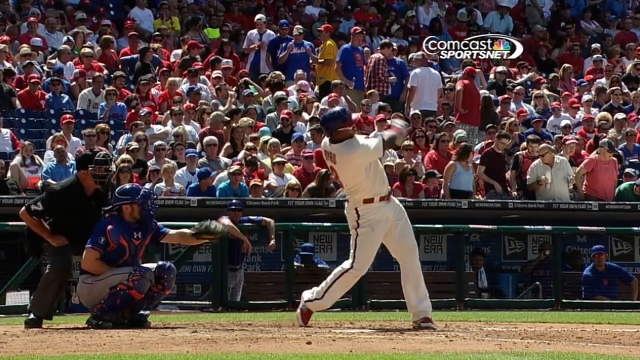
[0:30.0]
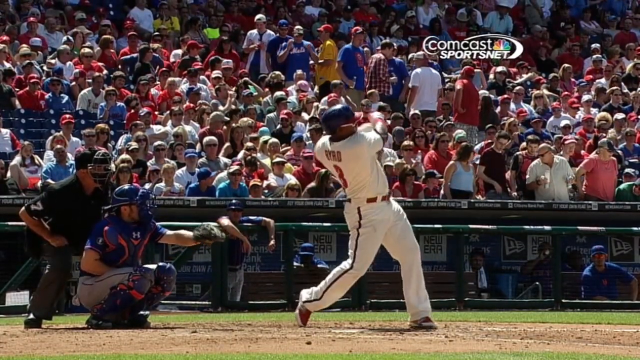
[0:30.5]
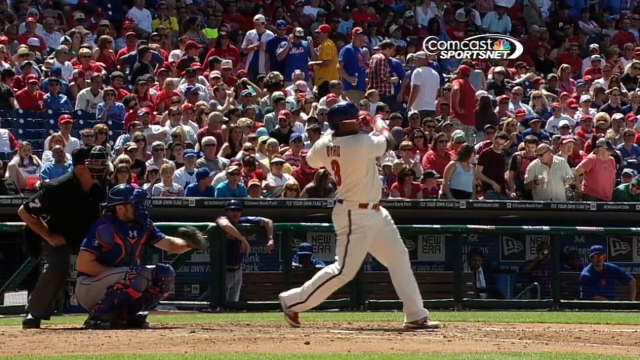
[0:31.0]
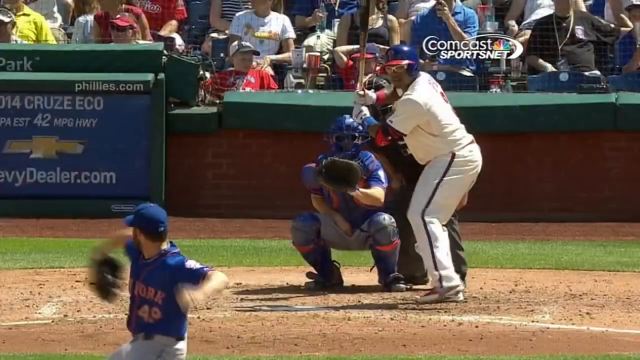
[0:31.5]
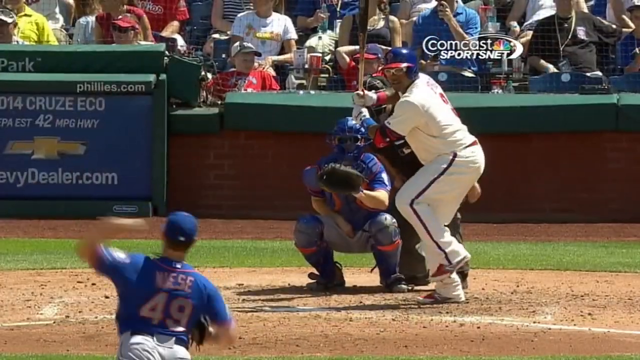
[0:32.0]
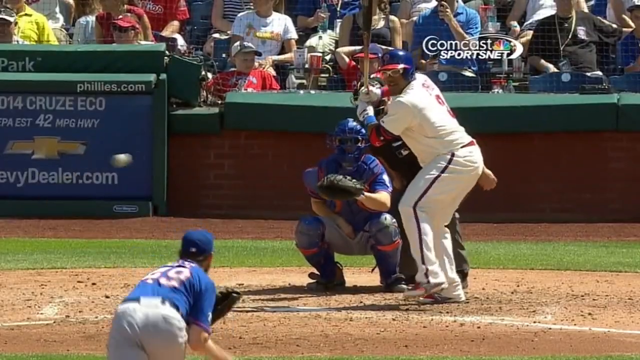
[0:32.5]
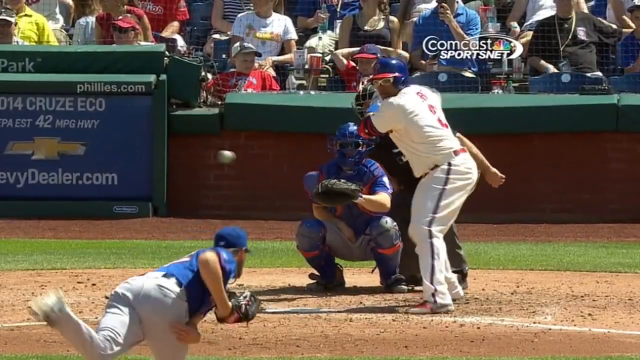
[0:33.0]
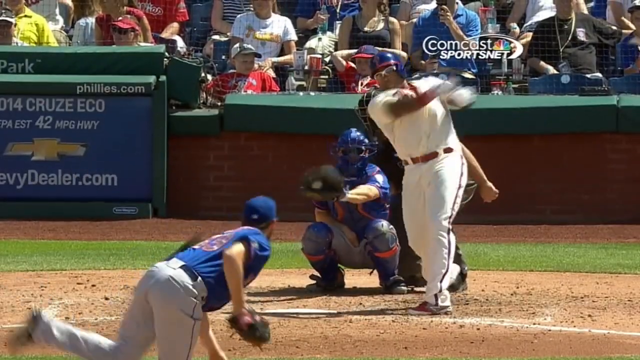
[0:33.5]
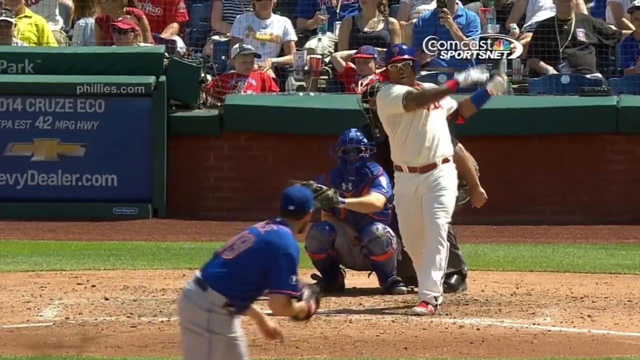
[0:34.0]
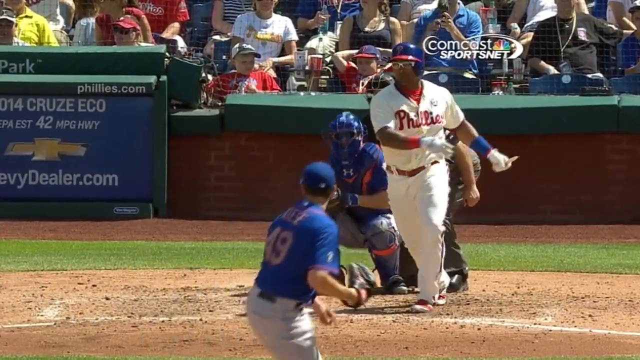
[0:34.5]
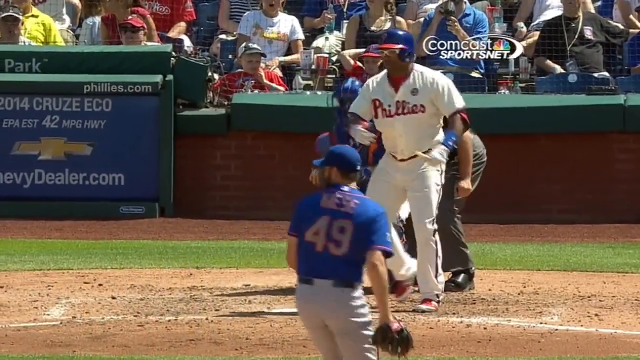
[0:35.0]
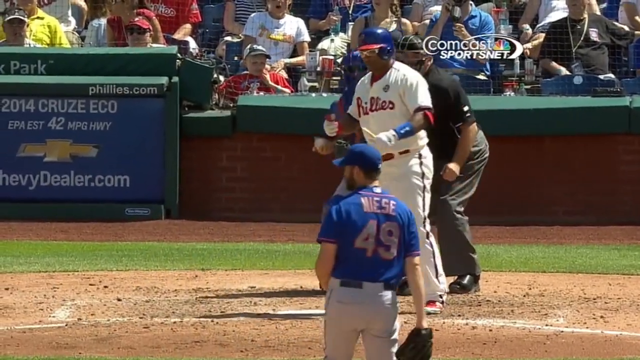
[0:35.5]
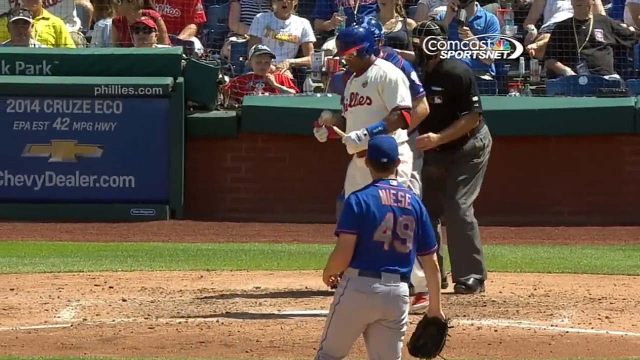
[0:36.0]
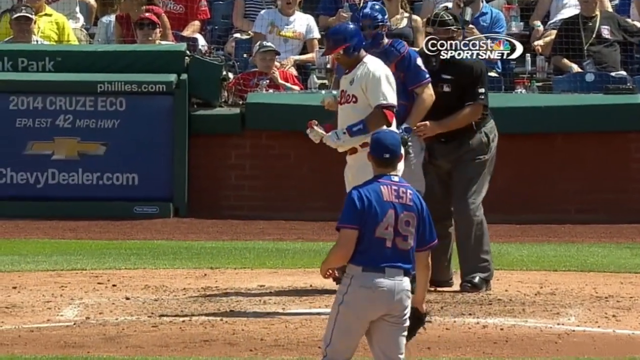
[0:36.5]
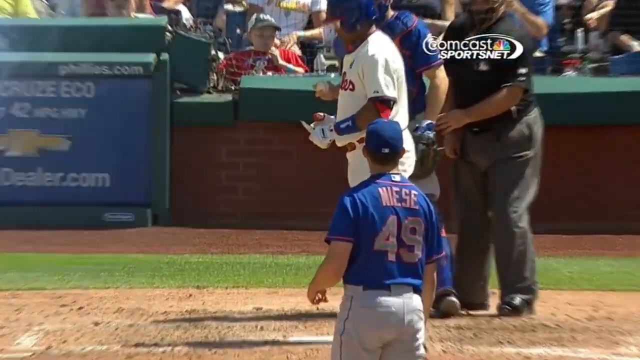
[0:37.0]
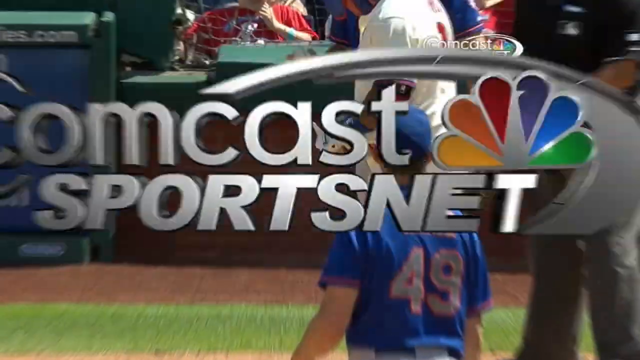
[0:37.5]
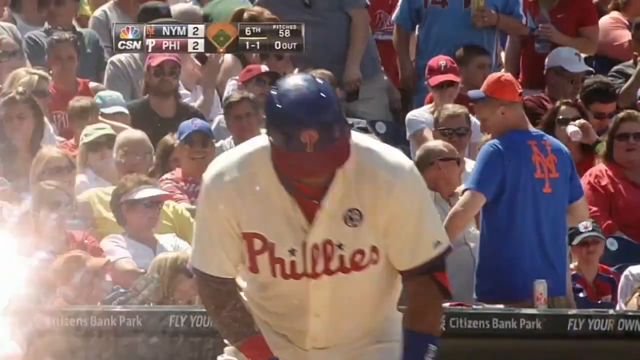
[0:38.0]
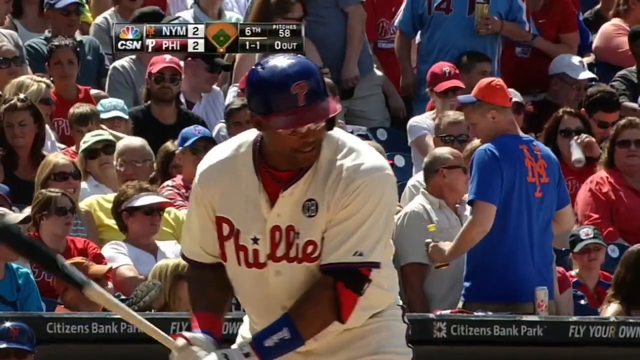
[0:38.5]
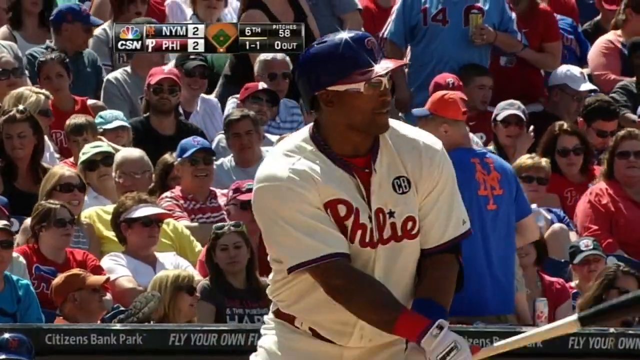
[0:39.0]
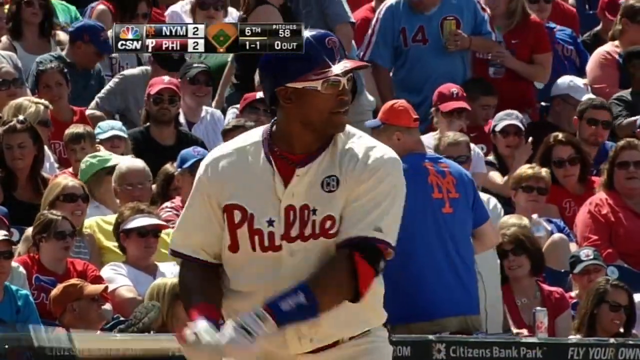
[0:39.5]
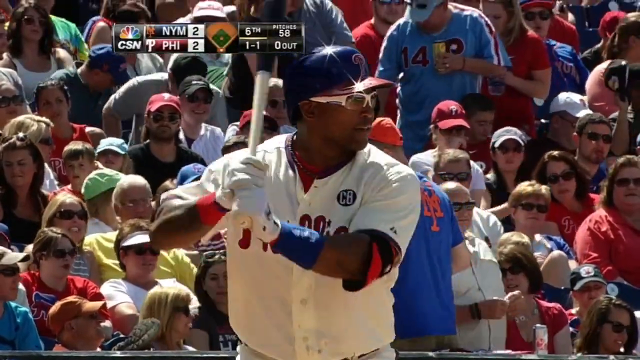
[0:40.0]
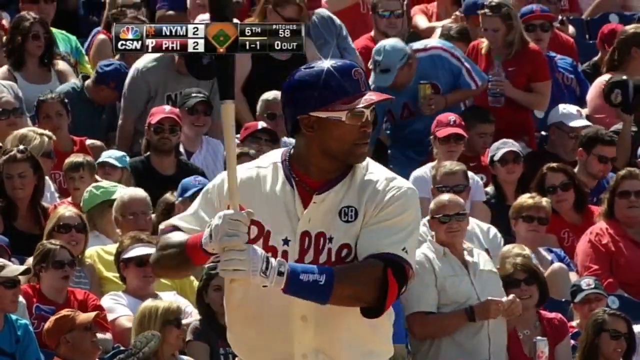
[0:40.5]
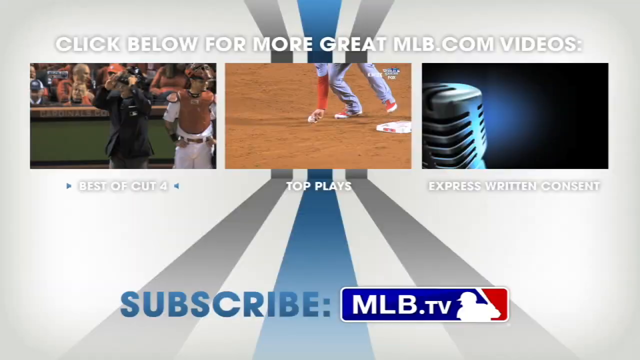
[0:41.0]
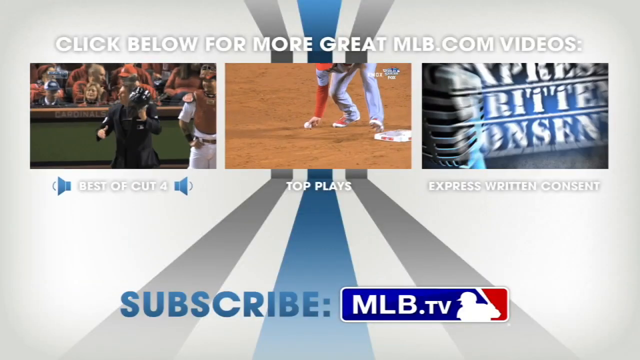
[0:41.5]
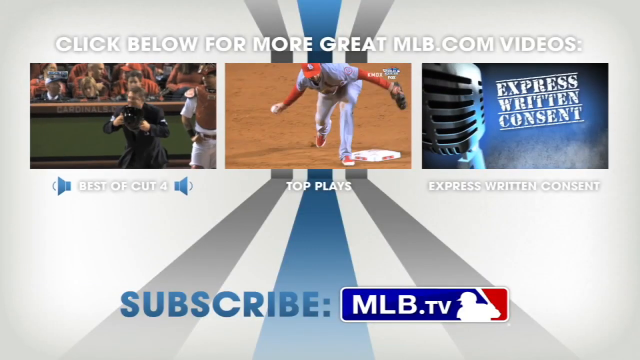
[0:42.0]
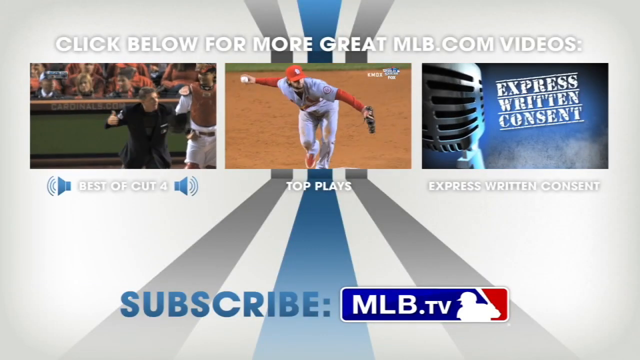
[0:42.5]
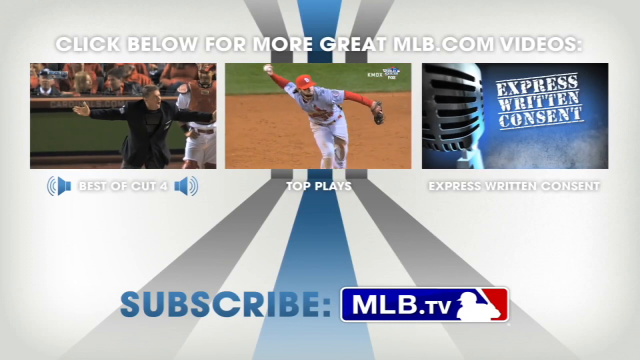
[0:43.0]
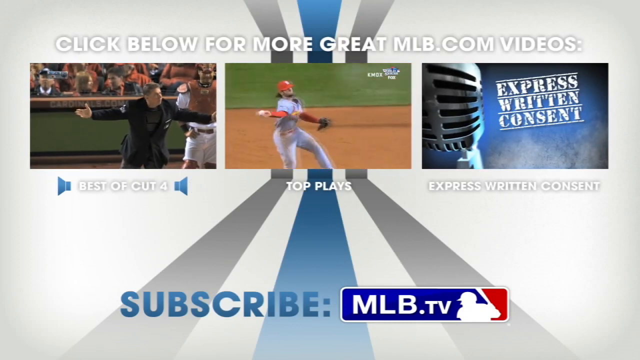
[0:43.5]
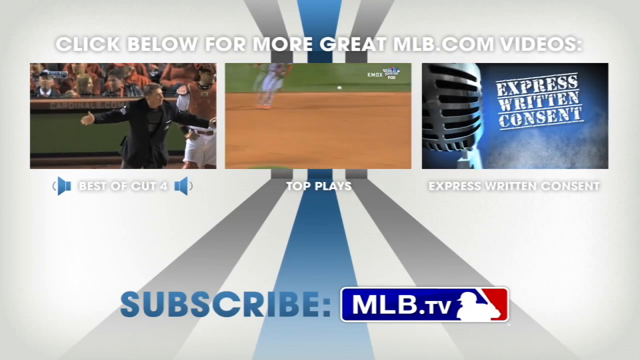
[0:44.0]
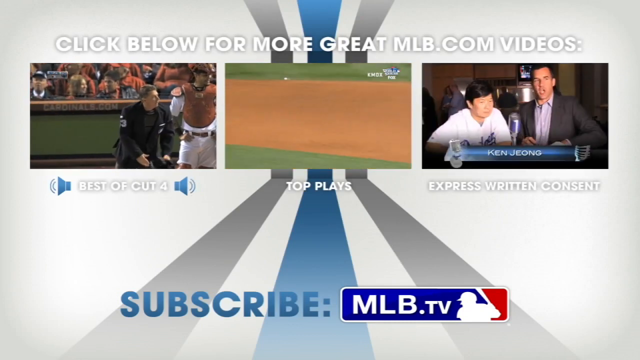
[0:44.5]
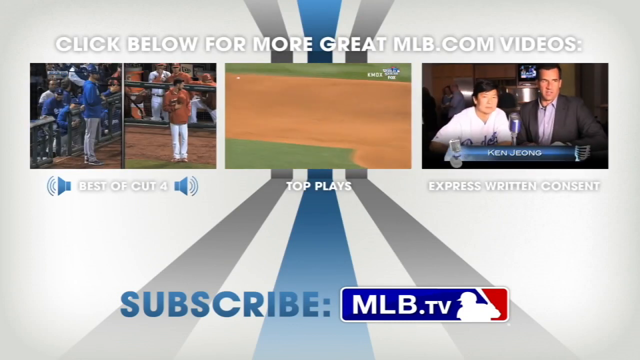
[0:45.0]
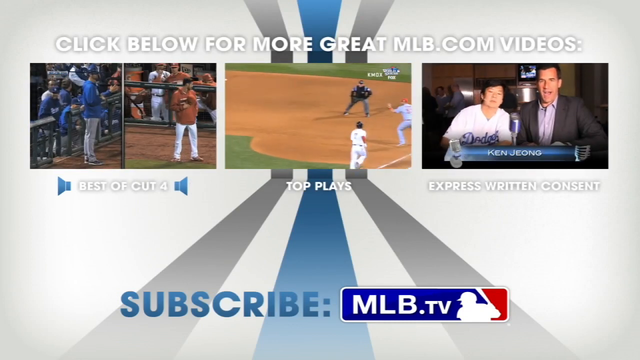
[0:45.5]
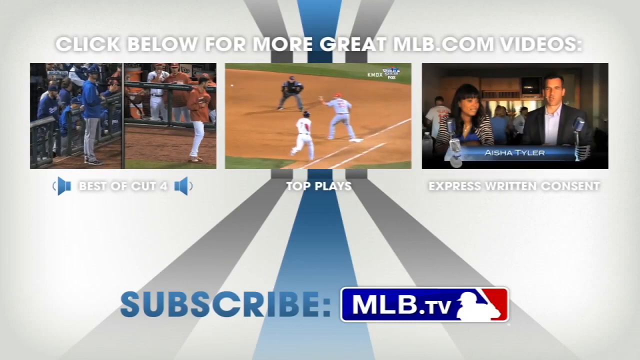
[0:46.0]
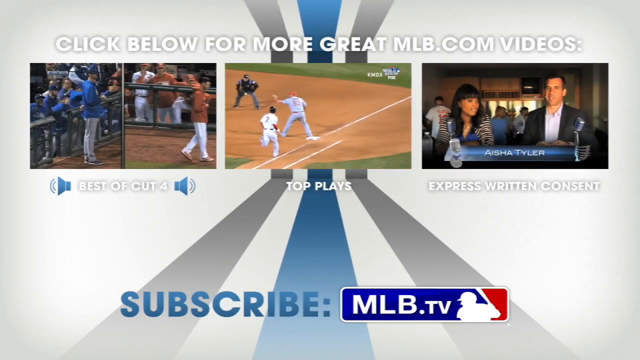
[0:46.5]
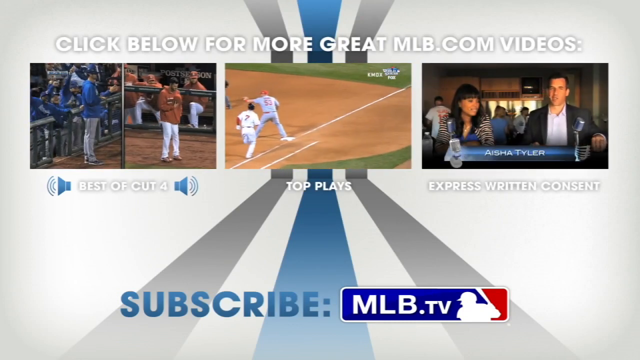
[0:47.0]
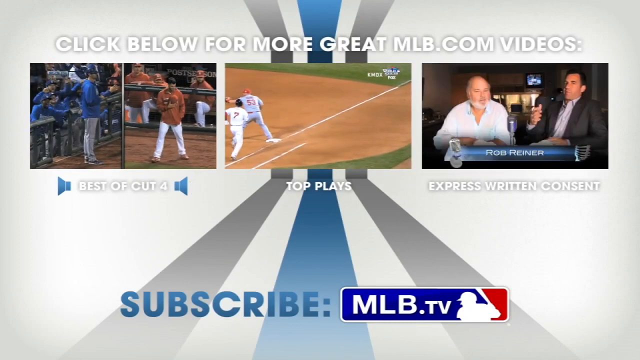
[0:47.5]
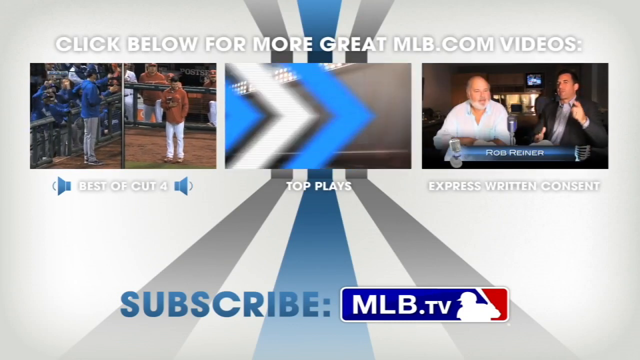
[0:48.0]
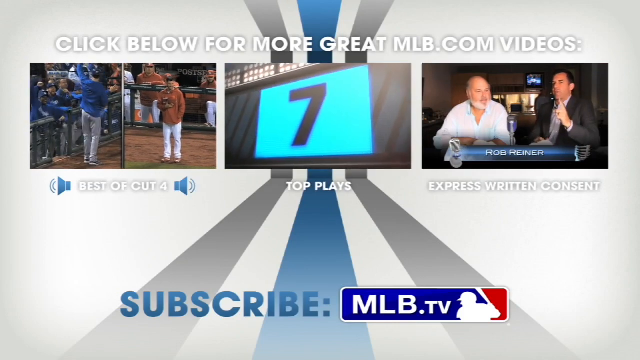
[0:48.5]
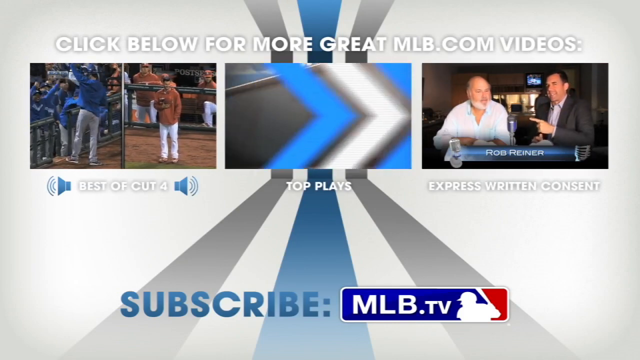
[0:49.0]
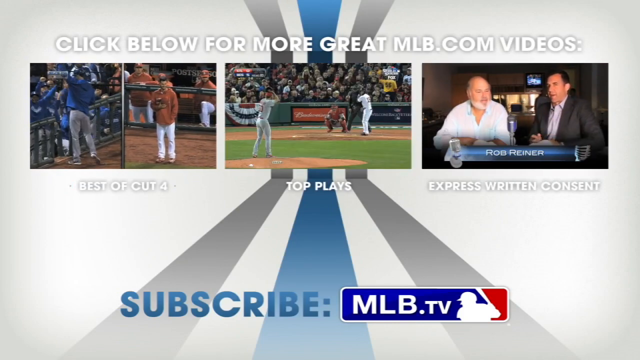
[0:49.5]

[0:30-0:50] Another slow-motion replay is shown from the perspective of the second baseman, over the pitcher's shoulder. The pitcher, number 49, is left-handed and pitches the ball. Behind the batter are the umpire and the catcher, and there is a low brick wall with a soft green top. An ad for Chevrolet on the left says "chevydealer.com", with "phillies.com" above it. The video then changes to three videos across the top in what looks like a commercial, with the text "subscribe MLB TV" and "Click below for more great MLB.com videos, such as top plays."